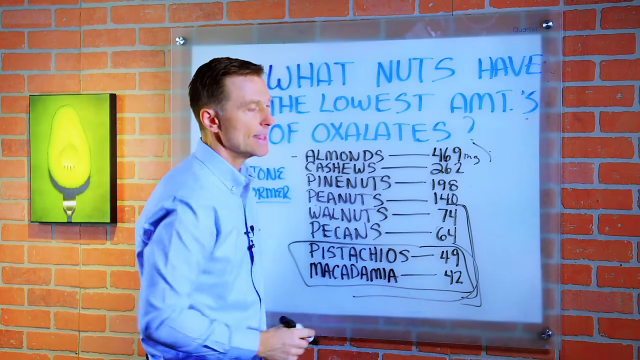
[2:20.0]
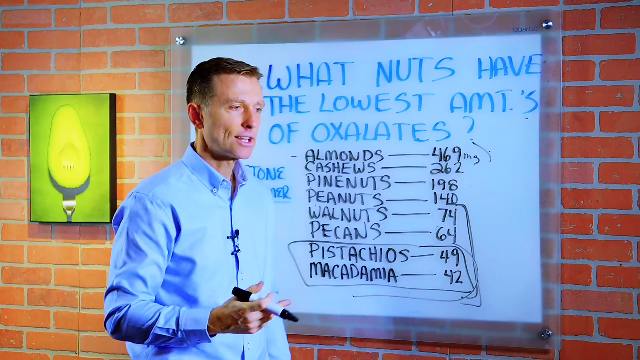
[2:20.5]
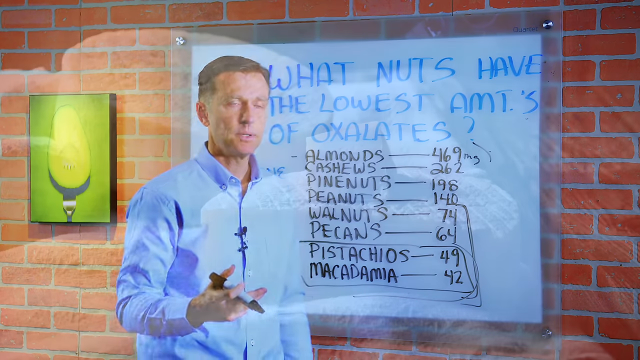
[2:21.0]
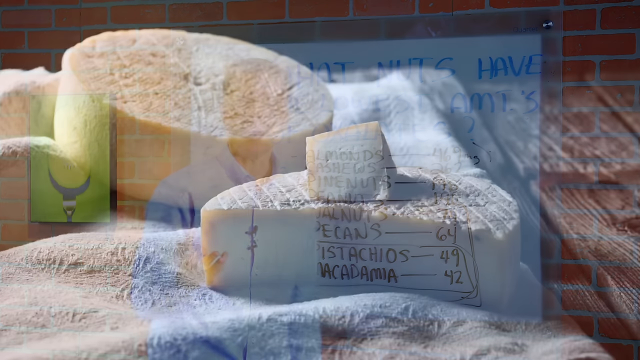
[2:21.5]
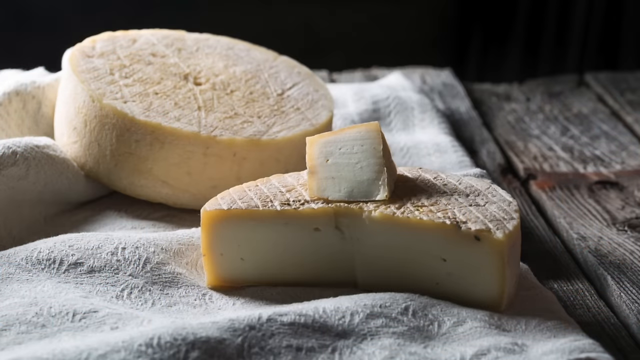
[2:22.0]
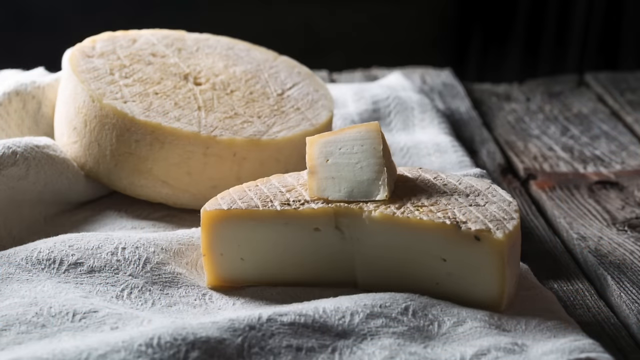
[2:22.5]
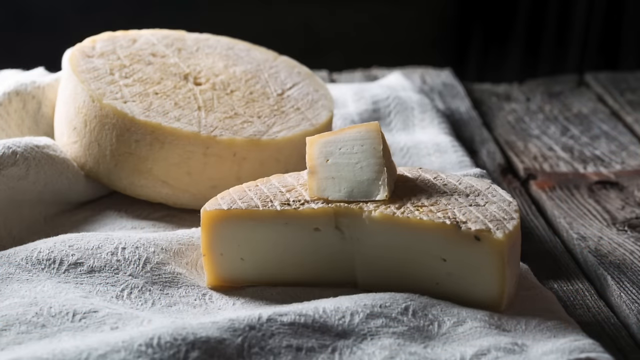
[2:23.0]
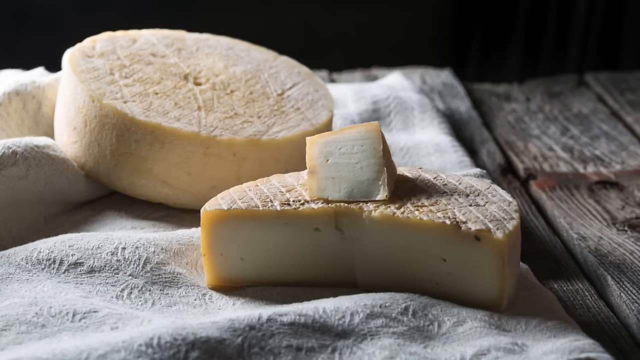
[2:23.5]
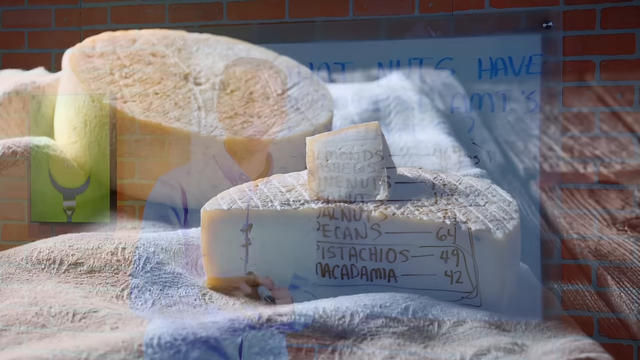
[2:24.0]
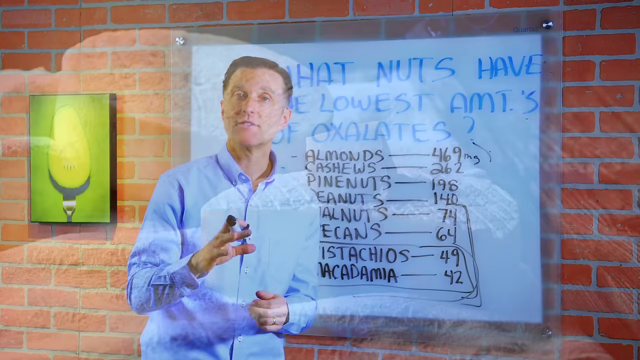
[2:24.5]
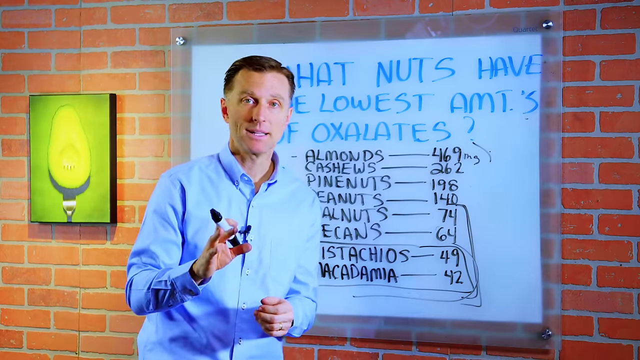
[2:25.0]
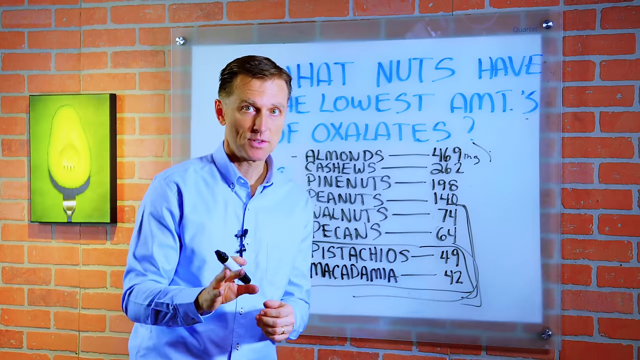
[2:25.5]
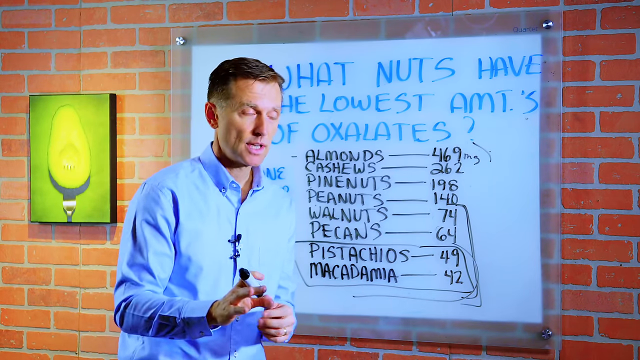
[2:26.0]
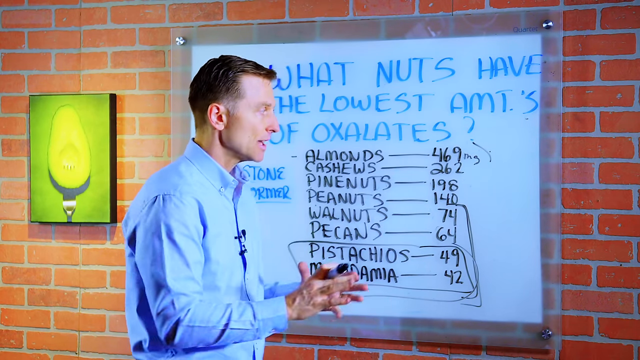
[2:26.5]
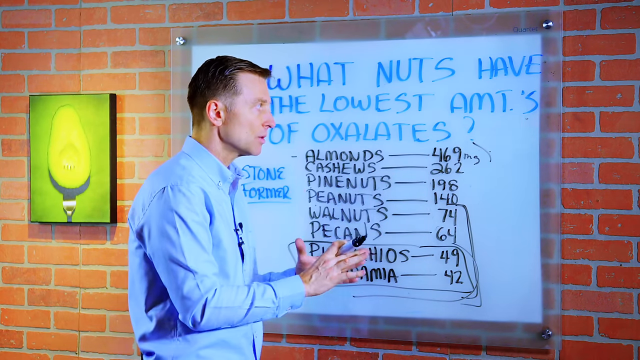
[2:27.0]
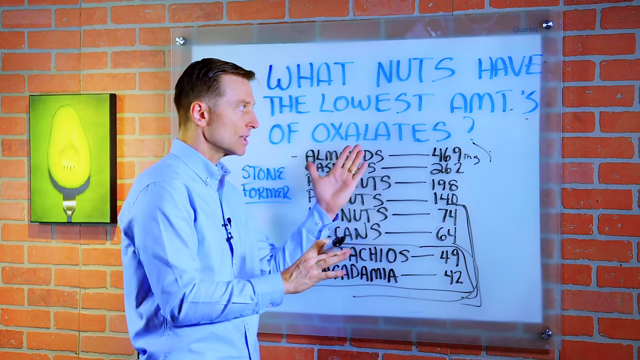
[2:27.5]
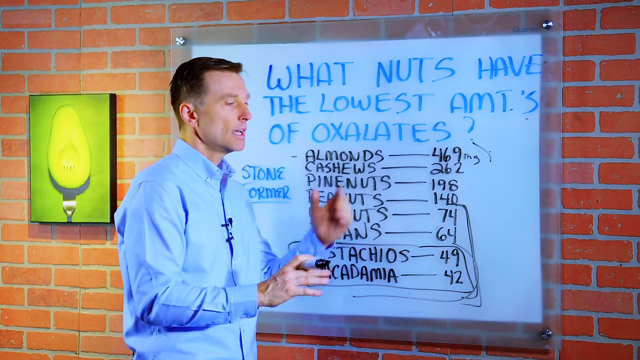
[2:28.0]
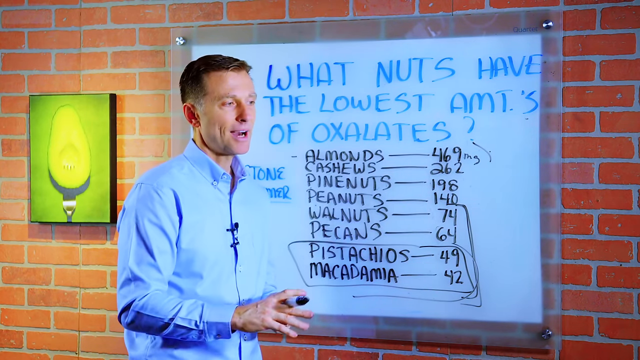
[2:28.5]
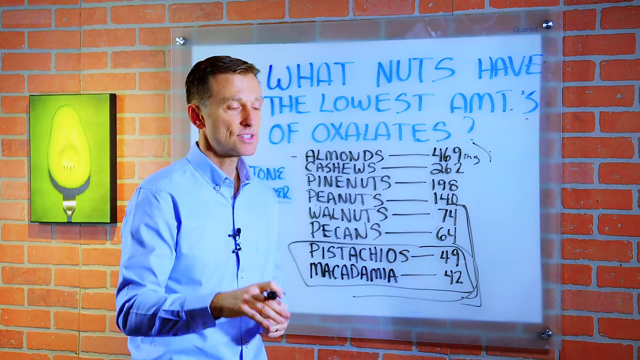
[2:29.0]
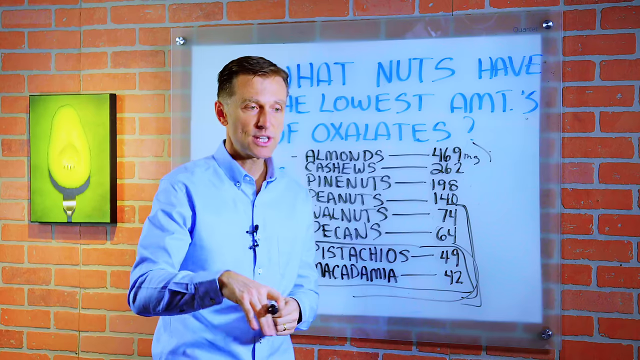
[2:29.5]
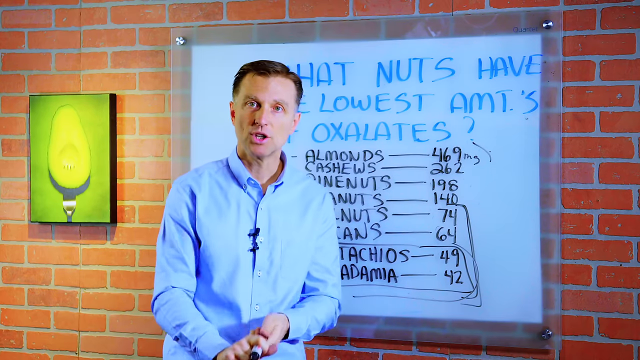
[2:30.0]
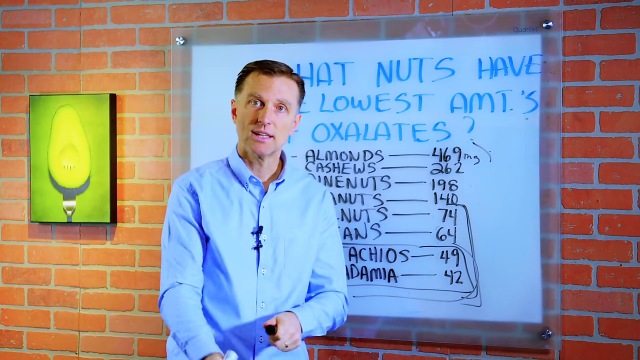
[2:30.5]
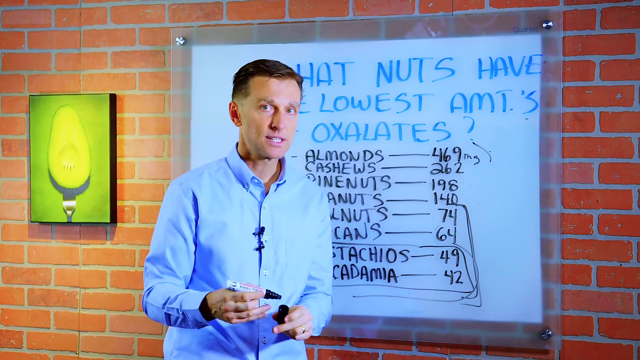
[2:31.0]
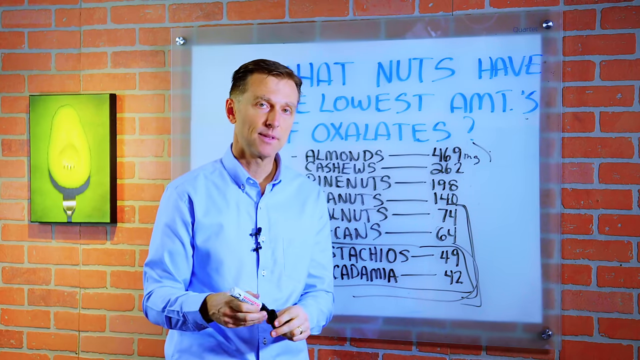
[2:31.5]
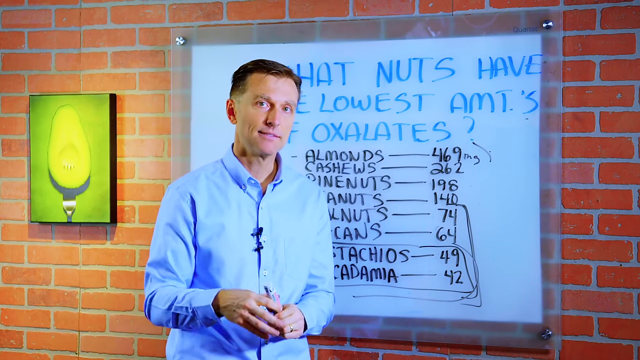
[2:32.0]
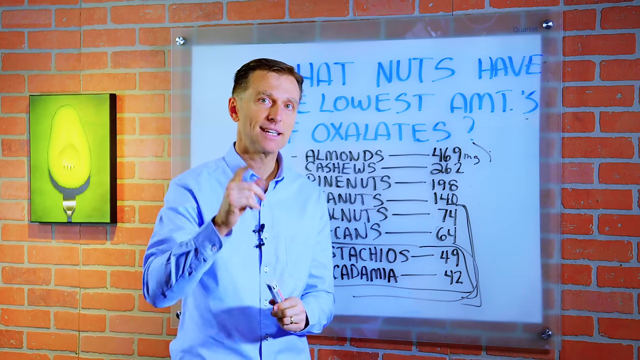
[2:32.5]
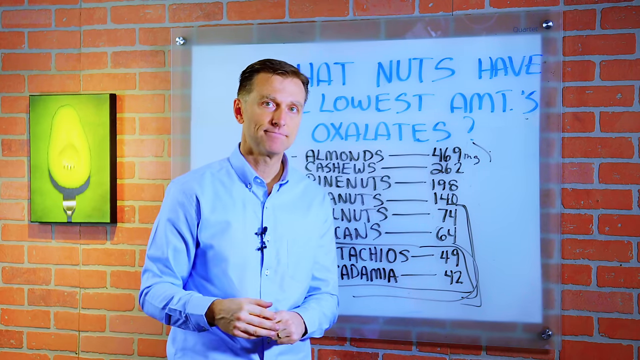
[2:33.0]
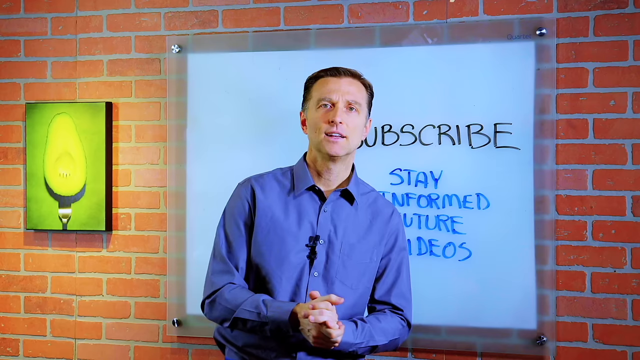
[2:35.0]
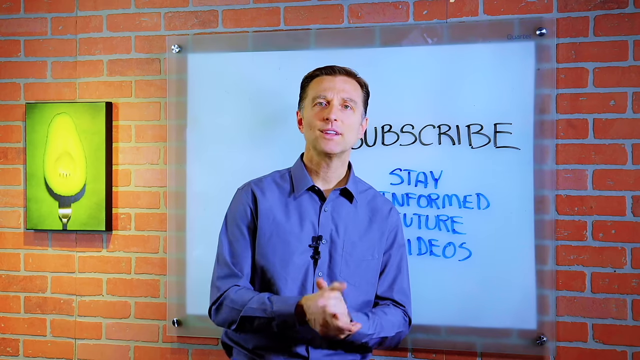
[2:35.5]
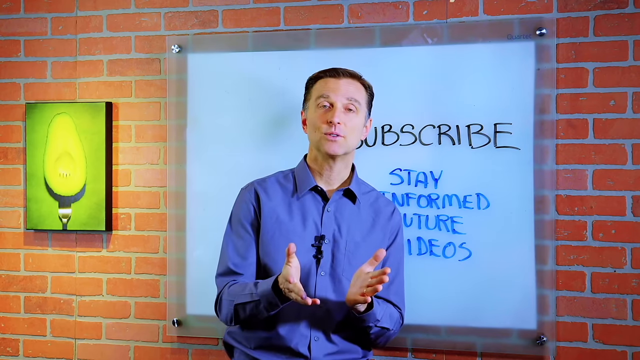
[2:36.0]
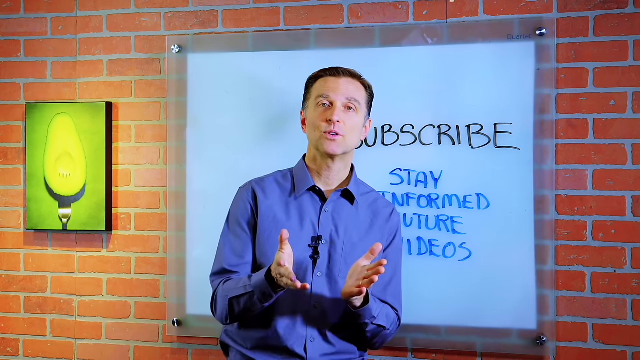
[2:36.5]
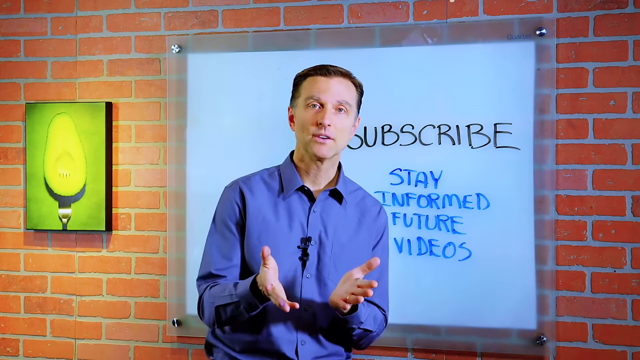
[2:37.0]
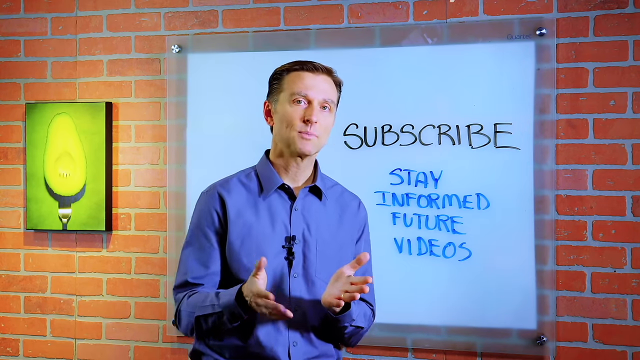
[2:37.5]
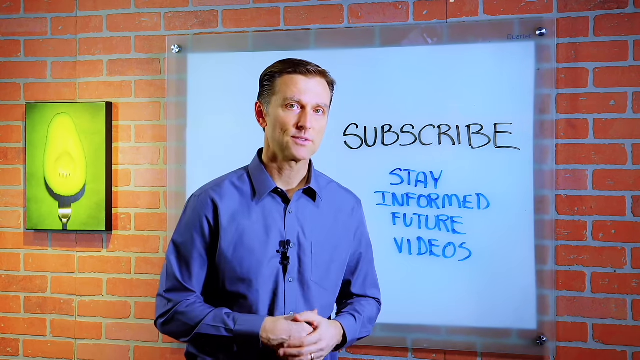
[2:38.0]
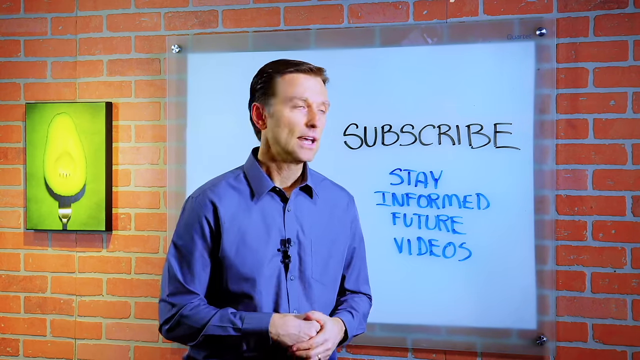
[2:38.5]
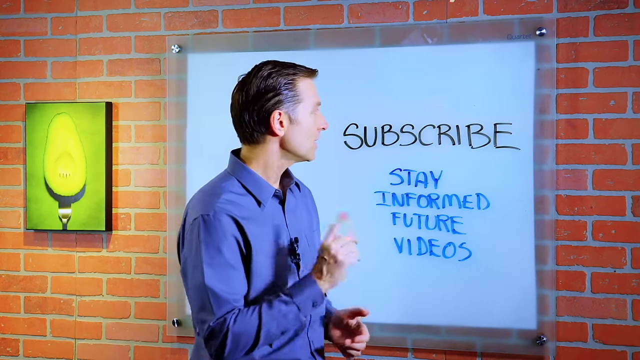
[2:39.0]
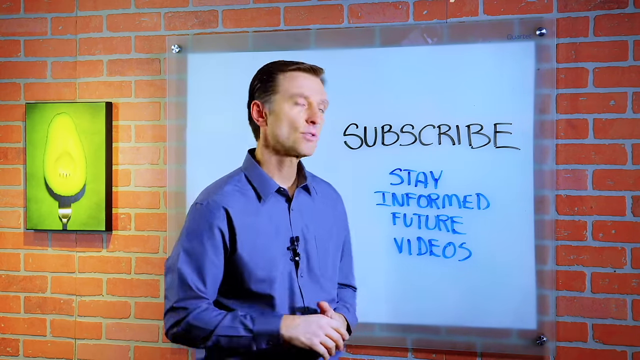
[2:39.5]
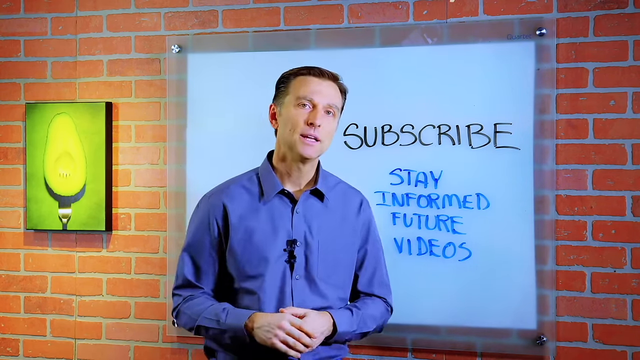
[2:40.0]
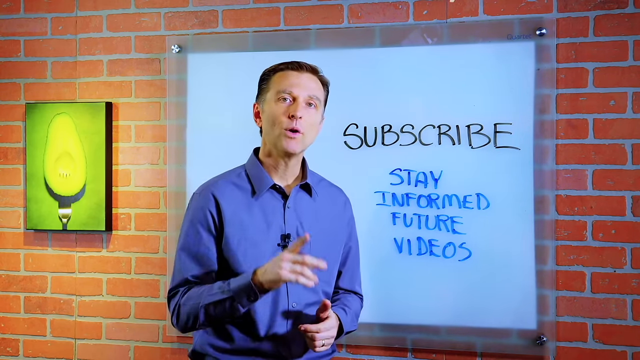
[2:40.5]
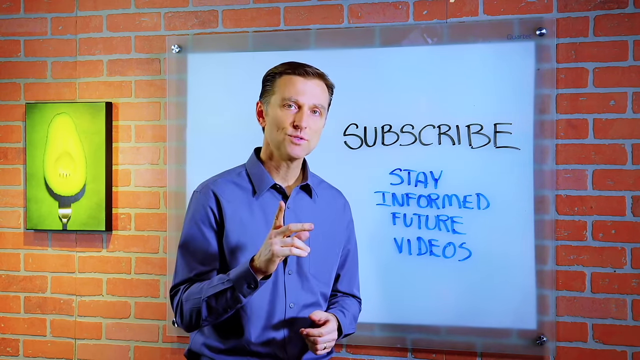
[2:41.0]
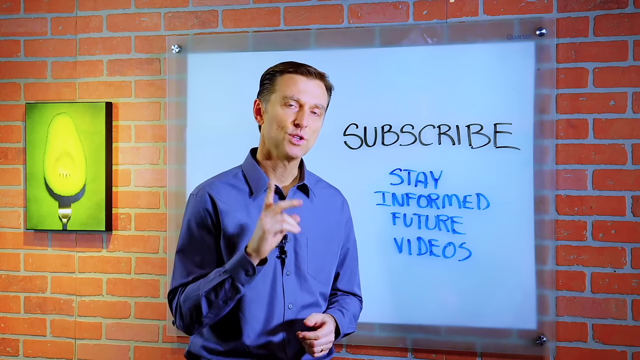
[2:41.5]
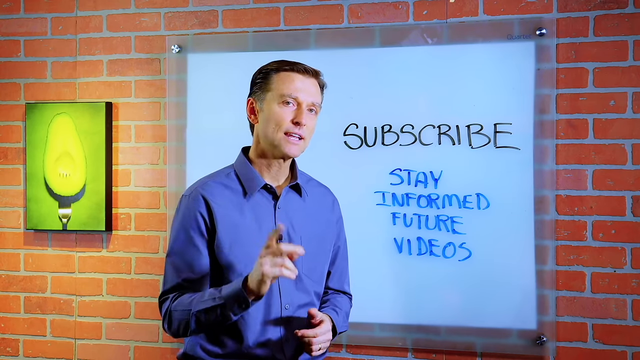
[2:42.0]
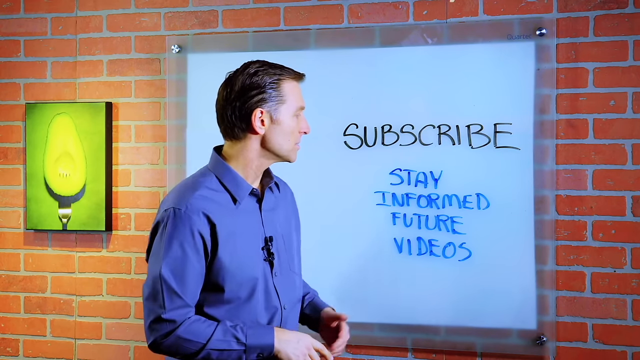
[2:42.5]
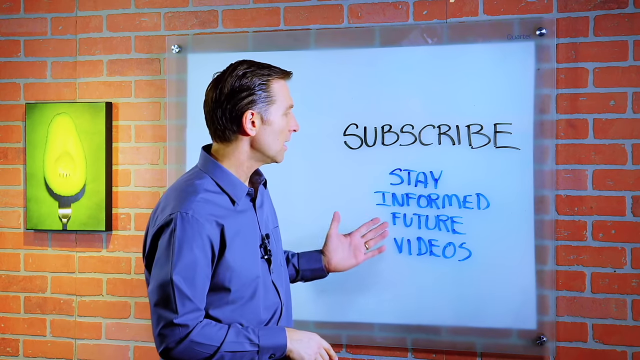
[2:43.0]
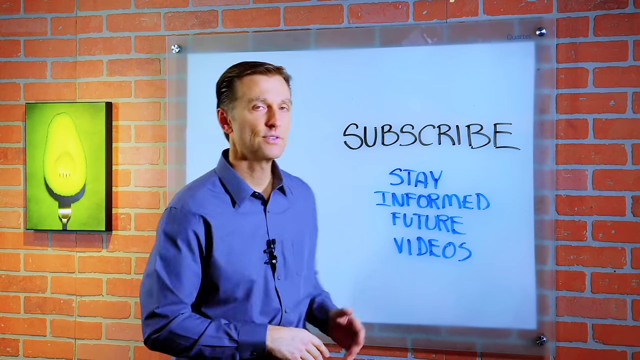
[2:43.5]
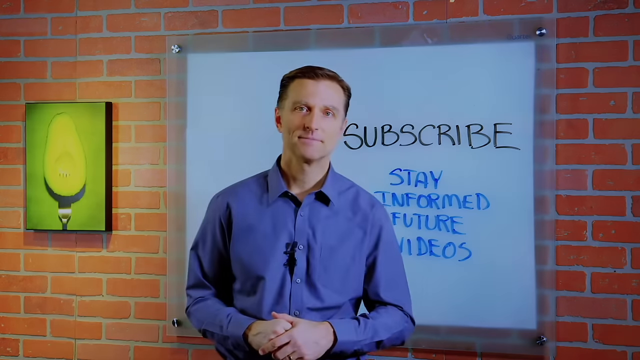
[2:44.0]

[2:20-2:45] The man, a doctor, dietician or nutritionist, appears with the list of nuts: almonds, cashews, pine nuts, peanuts, pistachios, macadamia, walnuts and pecans. Almonds are at the top of the list with 469 milligrams, and macadamia is at the bottom with 42 milligrams. Almonds and cashews are at the top of the list, while pistachios and macadamia are at the bottom. Fresh-squeezed orange juice and a potassium supplement are part of the presentation.